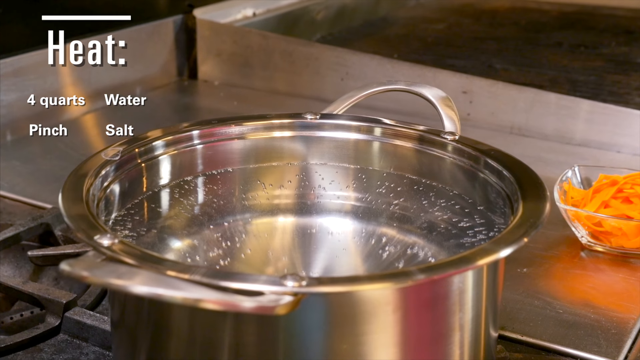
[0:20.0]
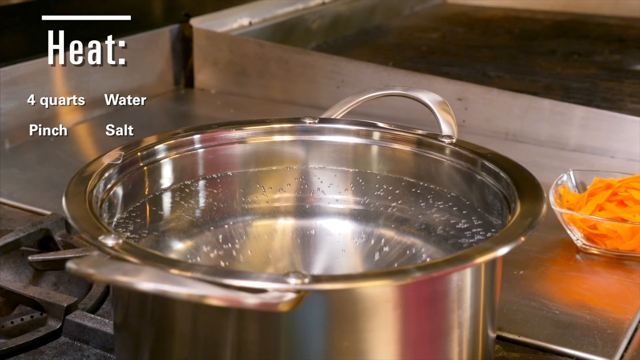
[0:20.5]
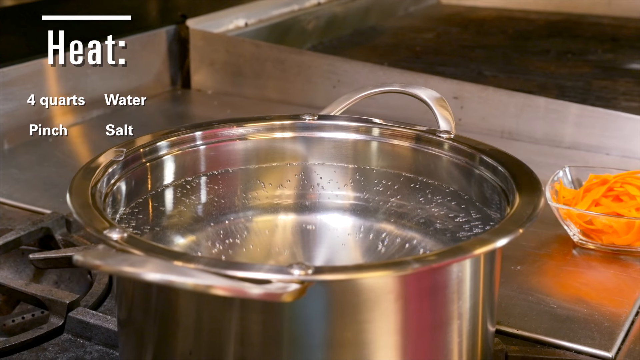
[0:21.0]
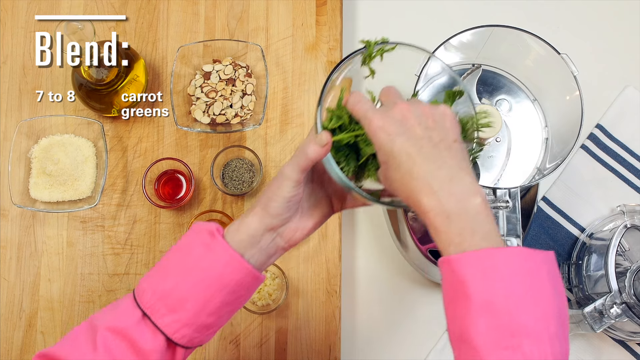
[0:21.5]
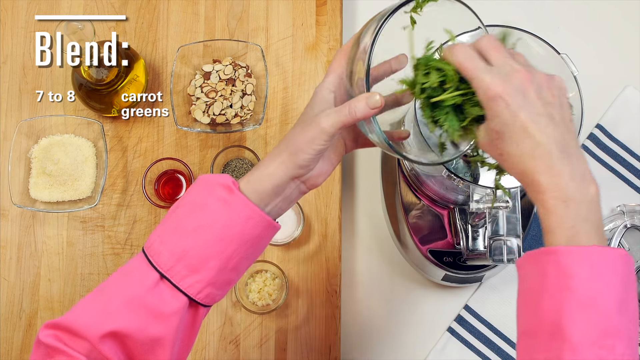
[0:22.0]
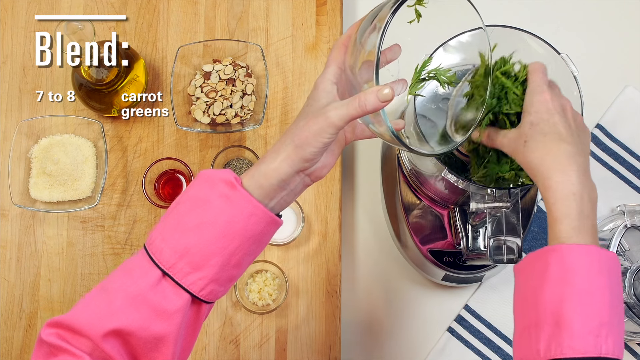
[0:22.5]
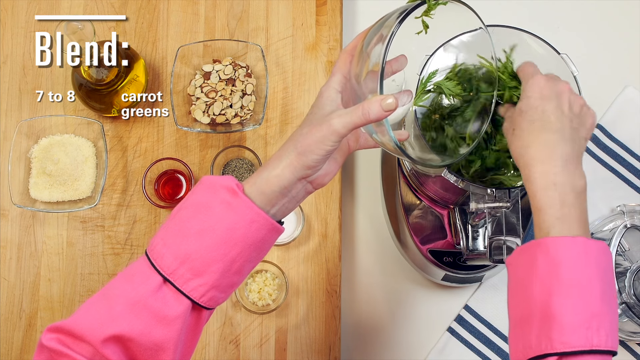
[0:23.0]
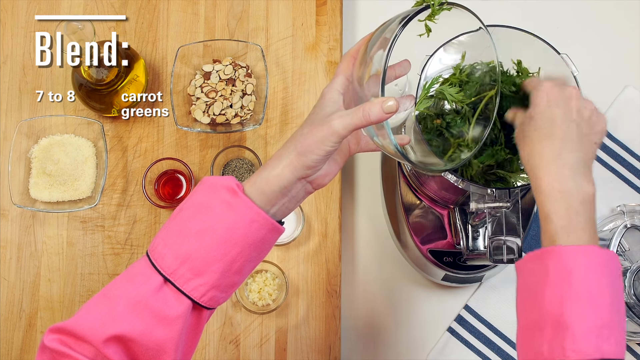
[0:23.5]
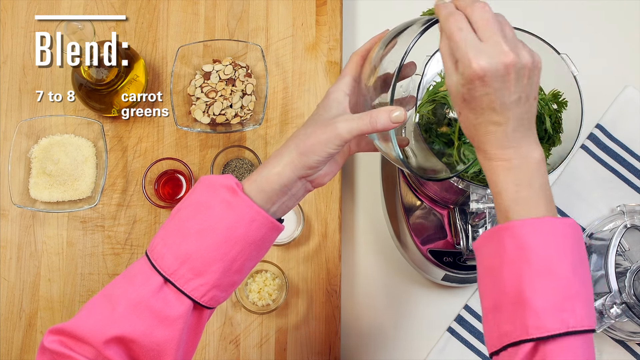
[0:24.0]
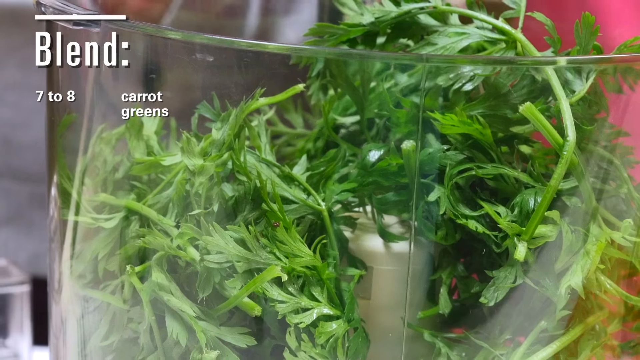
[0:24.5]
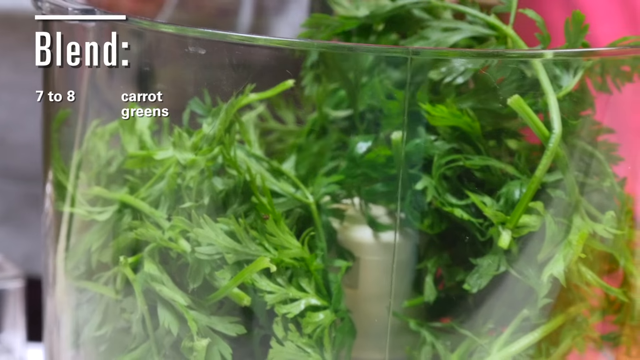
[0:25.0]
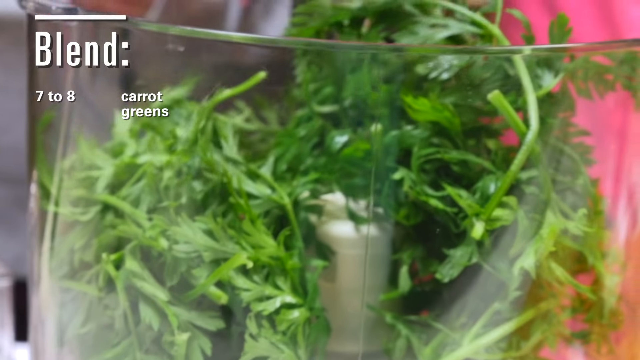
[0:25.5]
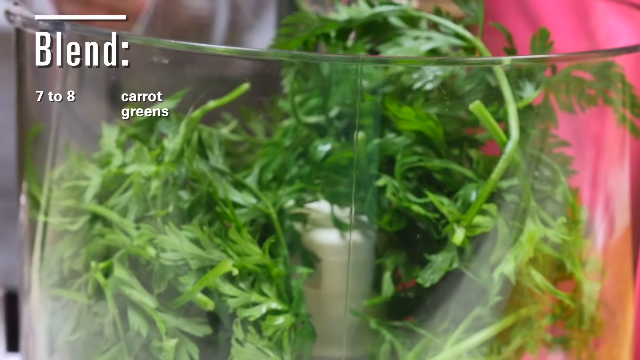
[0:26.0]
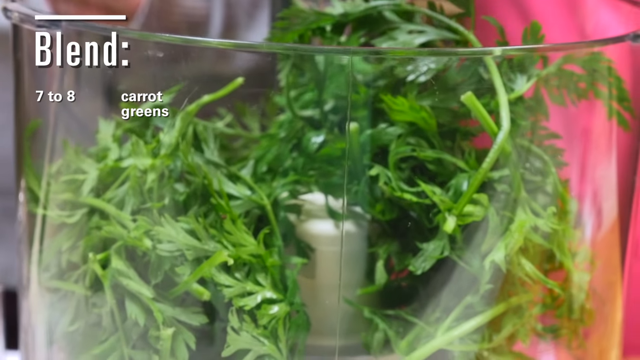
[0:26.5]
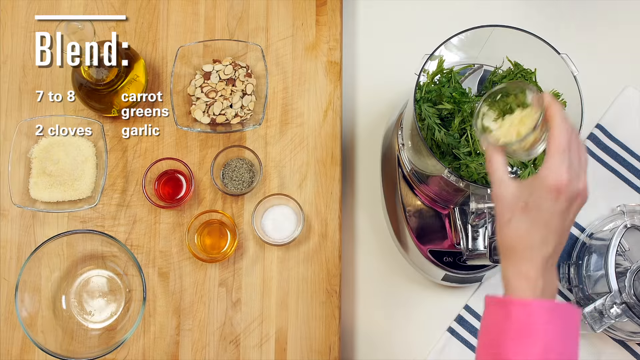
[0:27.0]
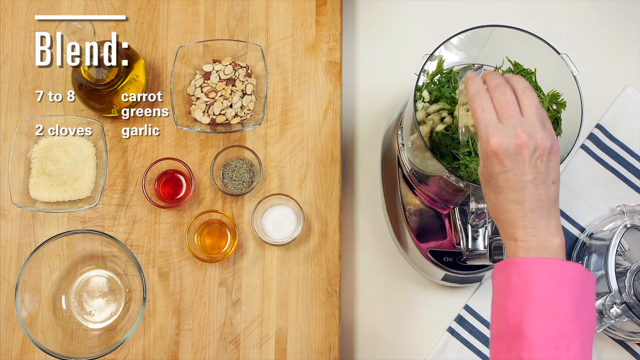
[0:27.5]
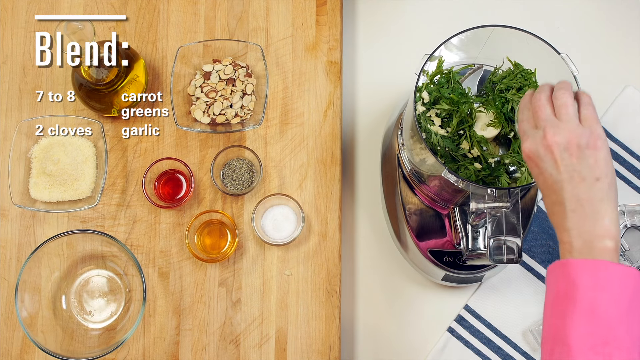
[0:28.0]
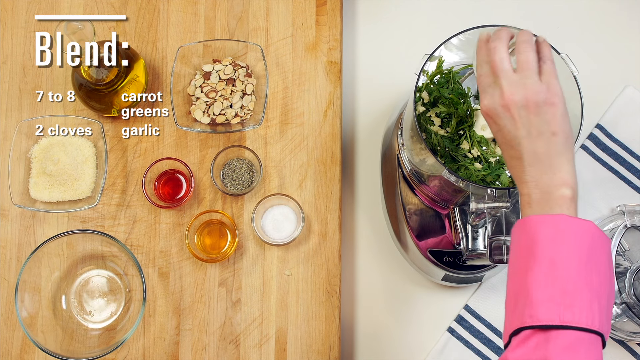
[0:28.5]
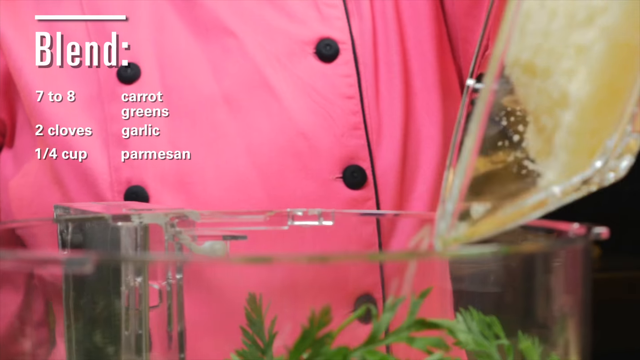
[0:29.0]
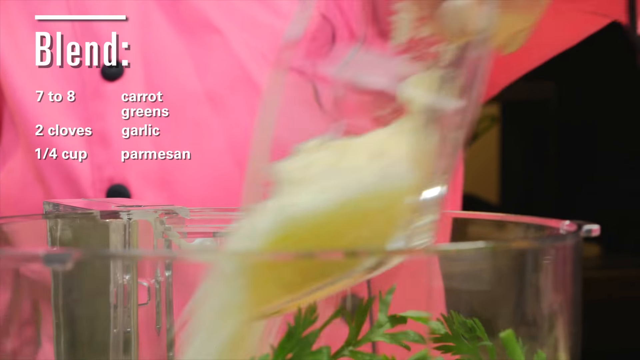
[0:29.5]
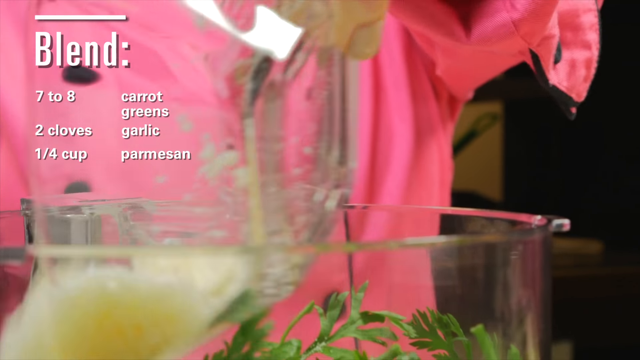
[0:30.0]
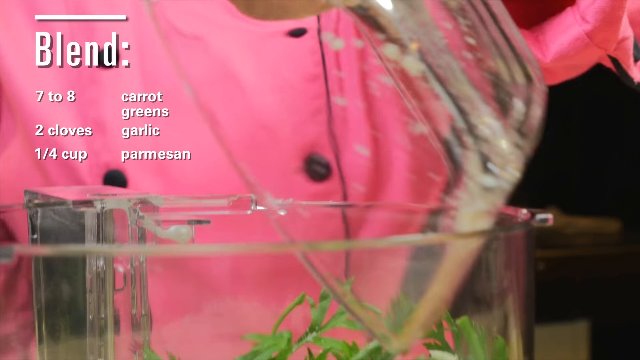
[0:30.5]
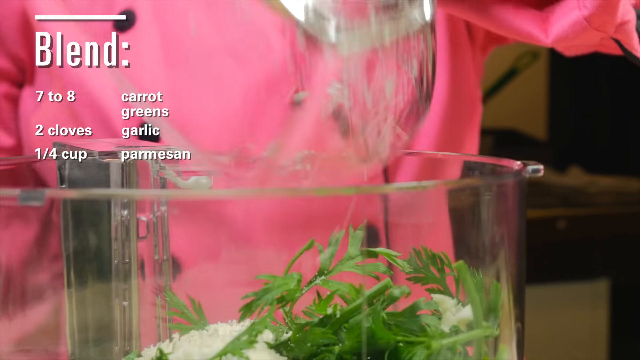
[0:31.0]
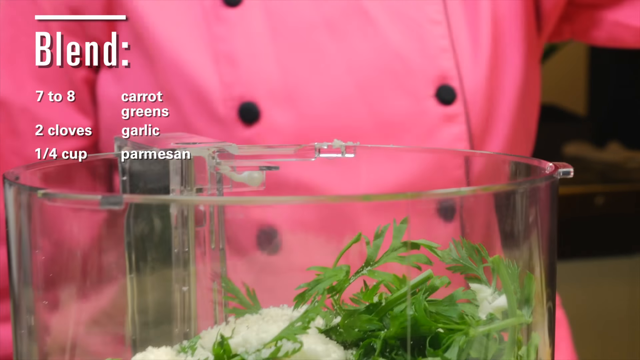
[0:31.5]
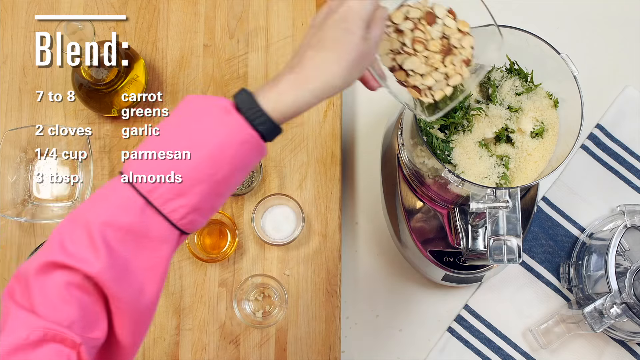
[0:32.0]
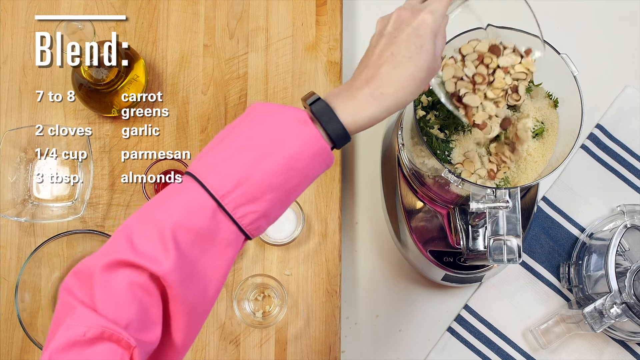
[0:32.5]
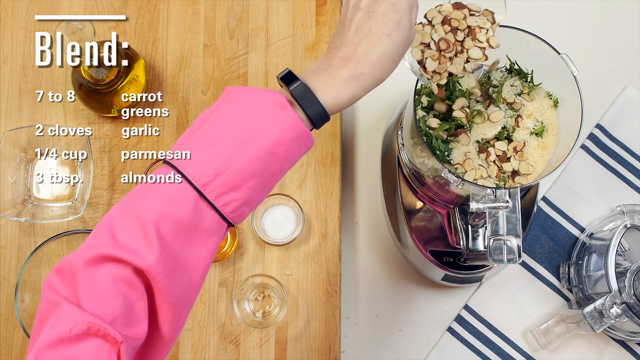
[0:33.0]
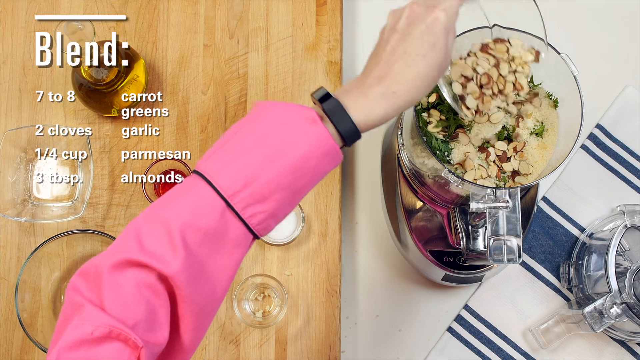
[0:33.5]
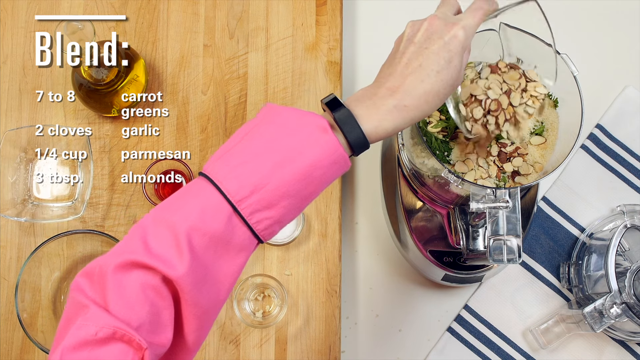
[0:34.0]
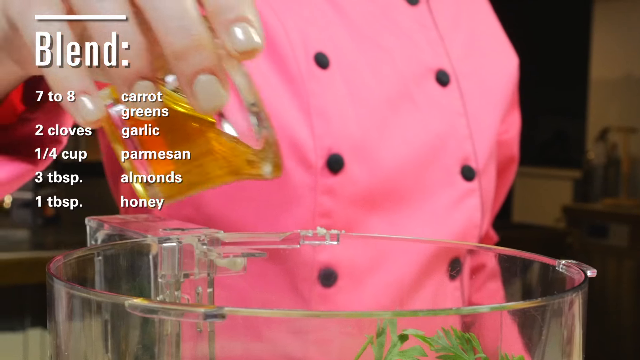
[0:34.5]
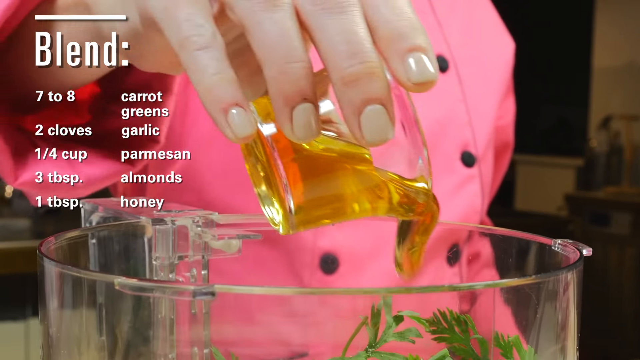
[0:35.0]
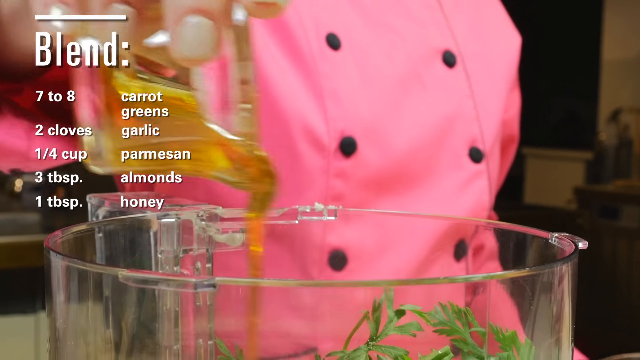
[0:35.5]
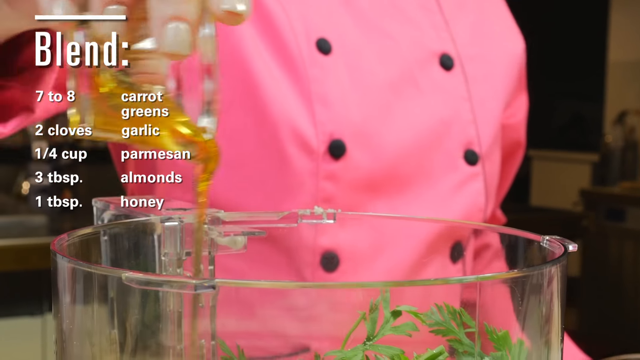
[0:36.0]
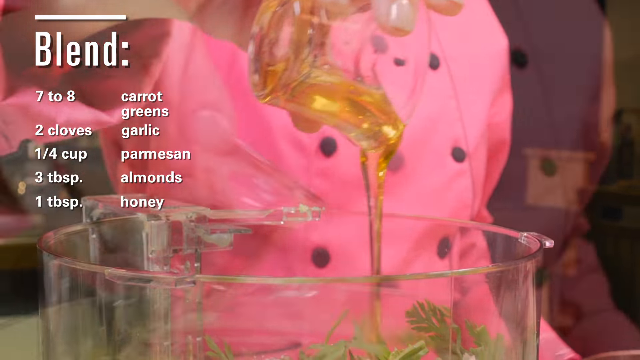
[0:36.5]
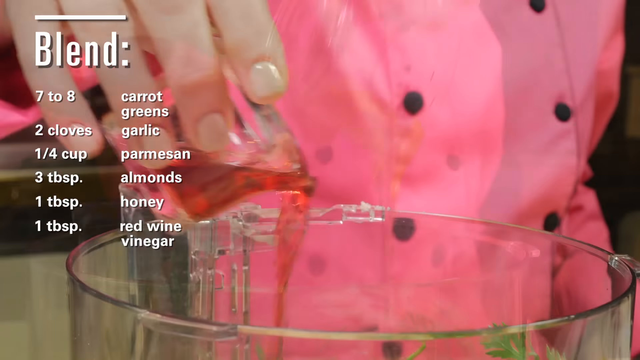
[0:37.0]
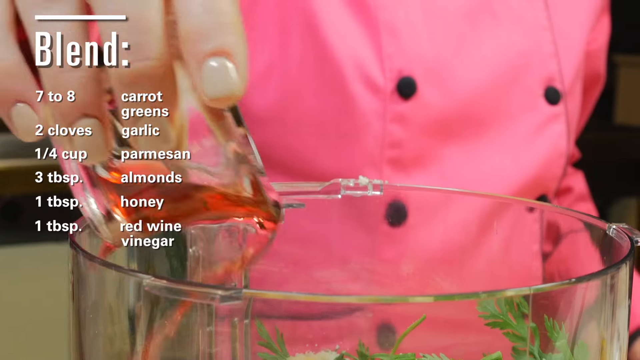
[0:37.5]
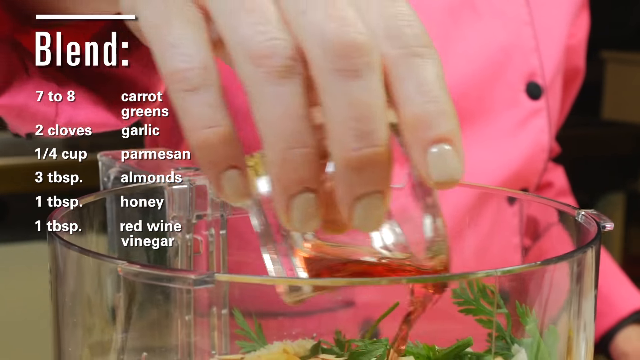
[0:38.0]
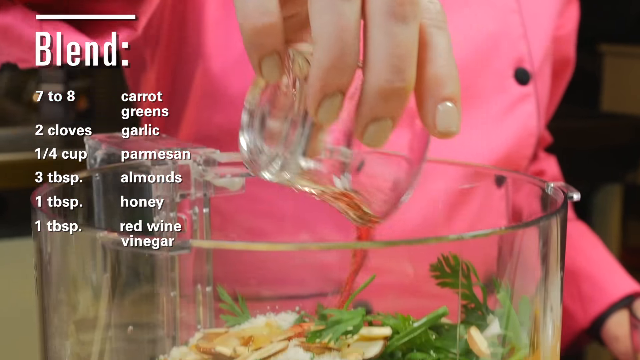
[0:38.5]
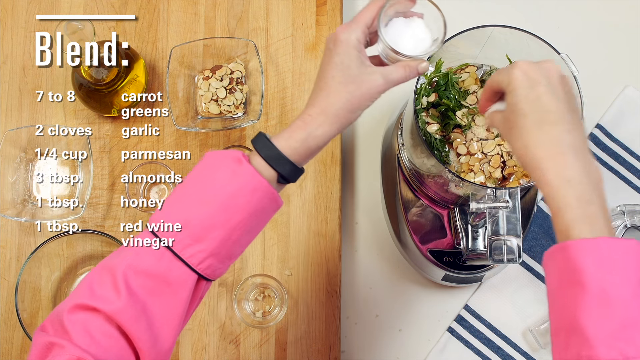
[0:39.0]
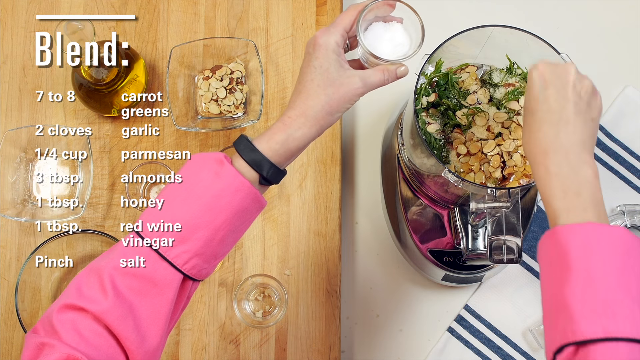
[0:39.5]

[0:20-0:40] A metal pot is on a stovetop with water boiling inside, and toward the right side of the screen there seems to be a clear bowl of carrots. White text overlaid in the top left reads "heat: four quarts water, pinch salt". The scene changes to two hands in pink sleeves that seem to pick up each bowl and put its ingredients into a blender: first carrot greens or some greens, then garlic, then parmesan. The ingredients are listed in white text in the top left corner, and the text updates with each item she adds. The scene keeps shifting between many angles to capture everything in detail.